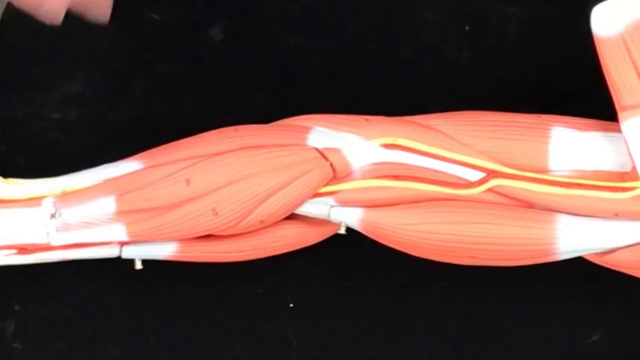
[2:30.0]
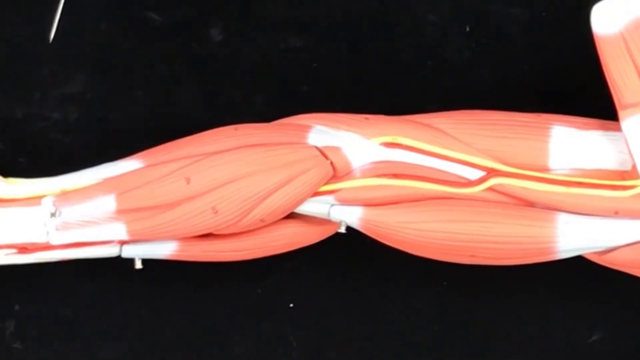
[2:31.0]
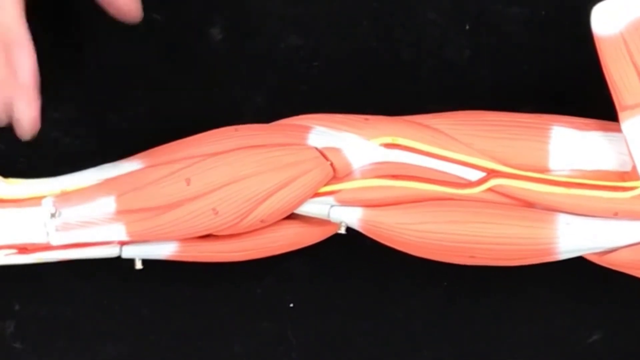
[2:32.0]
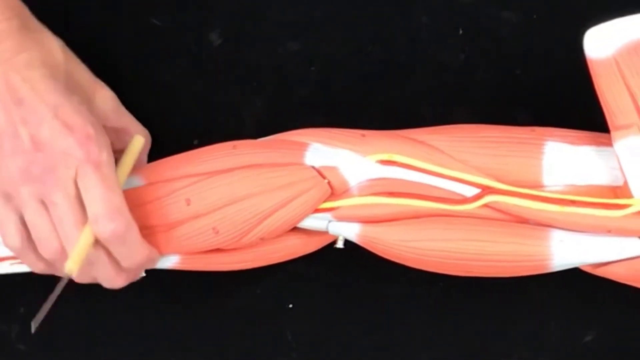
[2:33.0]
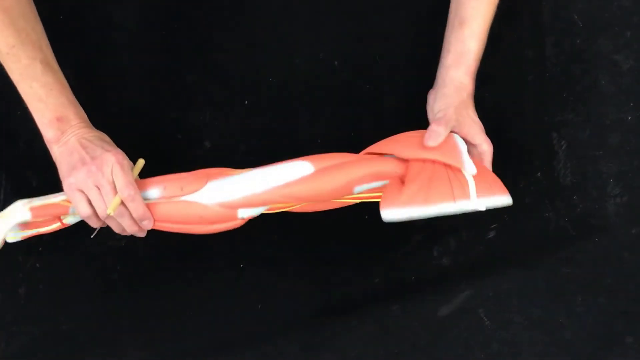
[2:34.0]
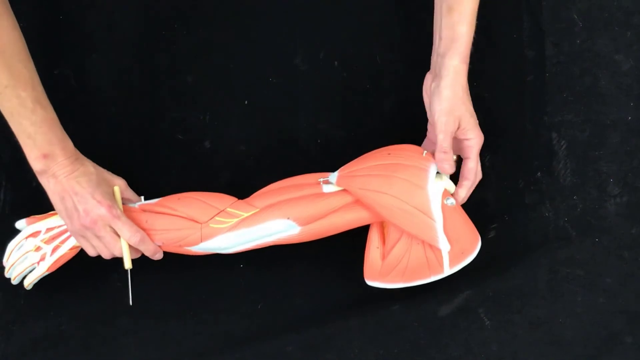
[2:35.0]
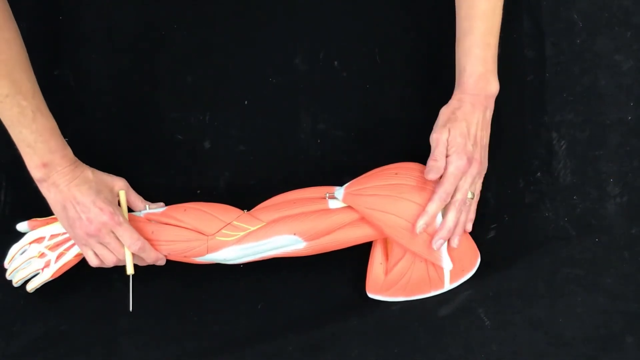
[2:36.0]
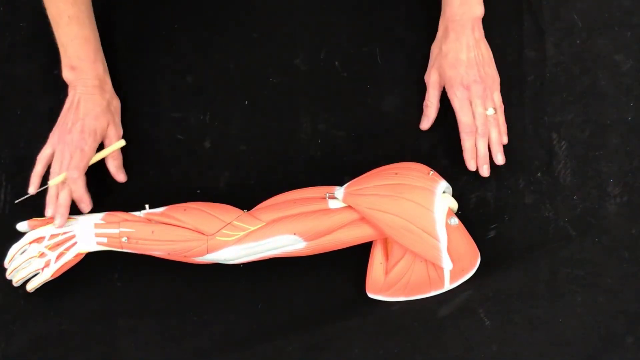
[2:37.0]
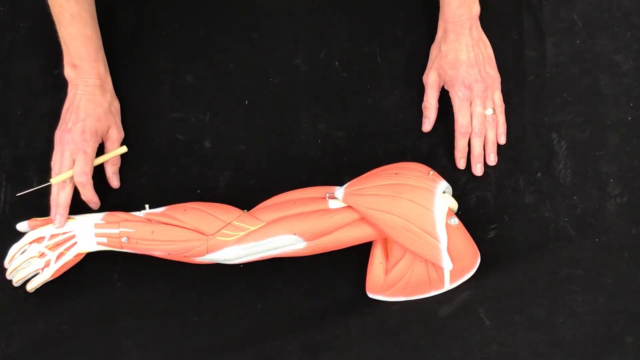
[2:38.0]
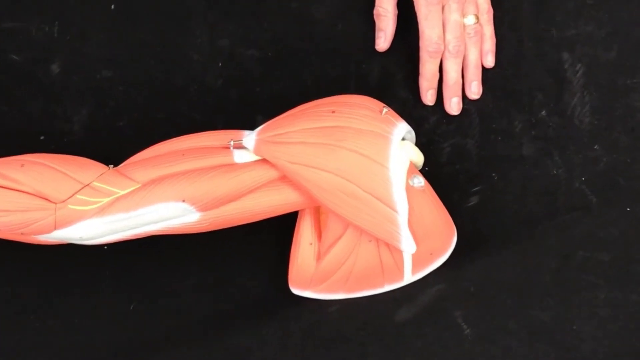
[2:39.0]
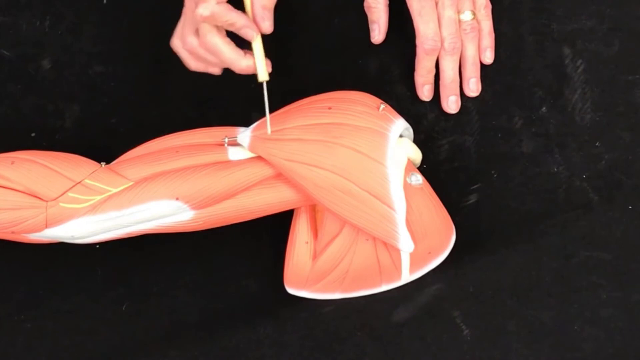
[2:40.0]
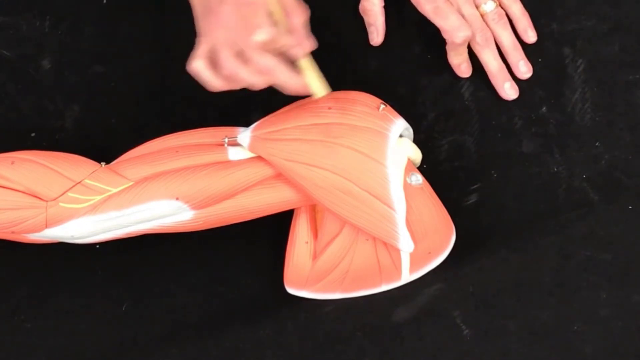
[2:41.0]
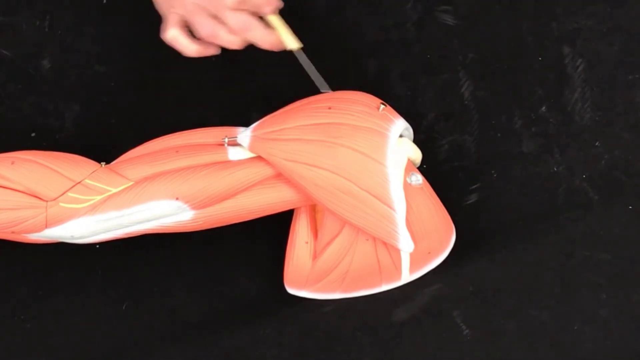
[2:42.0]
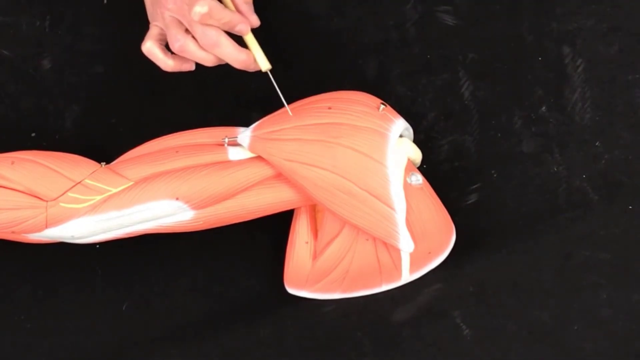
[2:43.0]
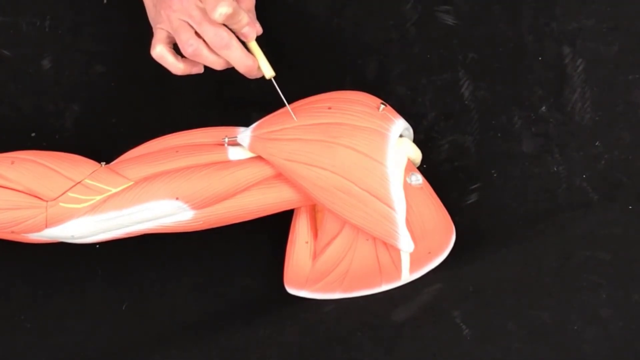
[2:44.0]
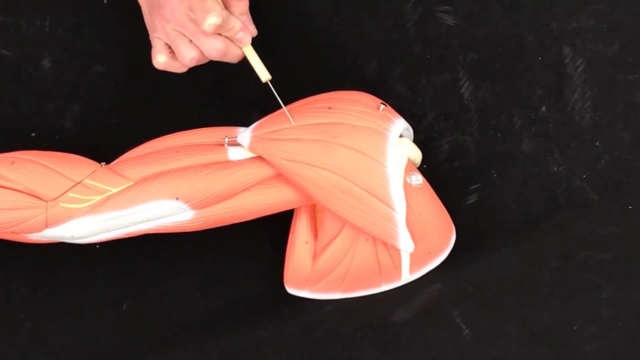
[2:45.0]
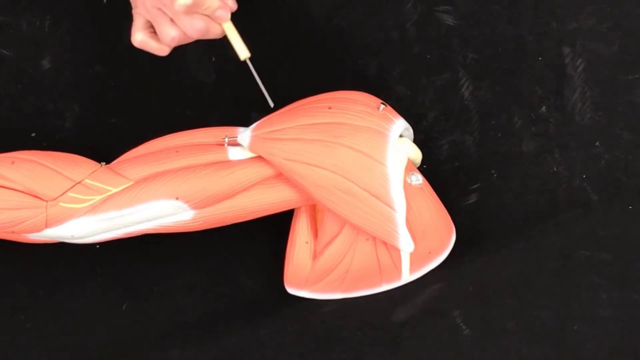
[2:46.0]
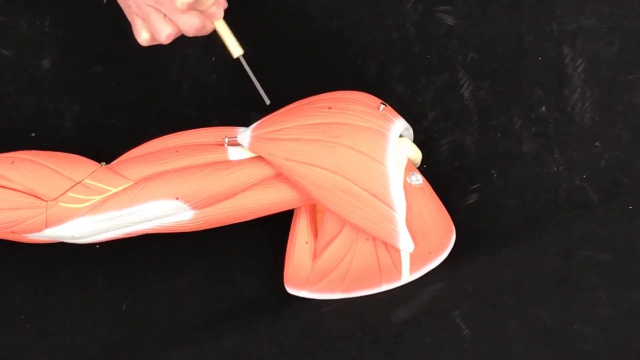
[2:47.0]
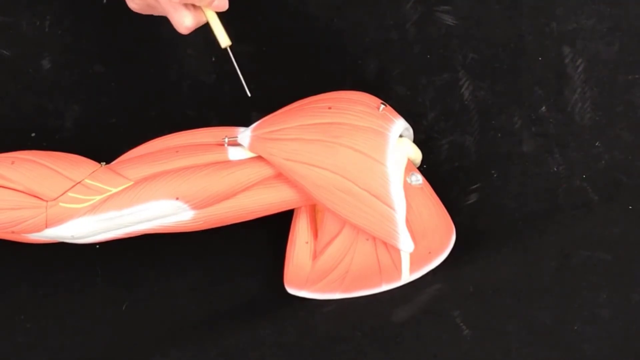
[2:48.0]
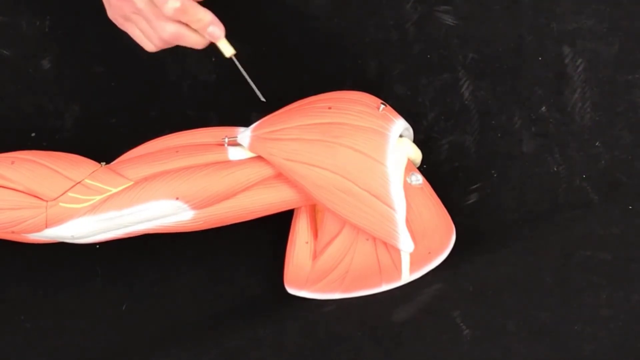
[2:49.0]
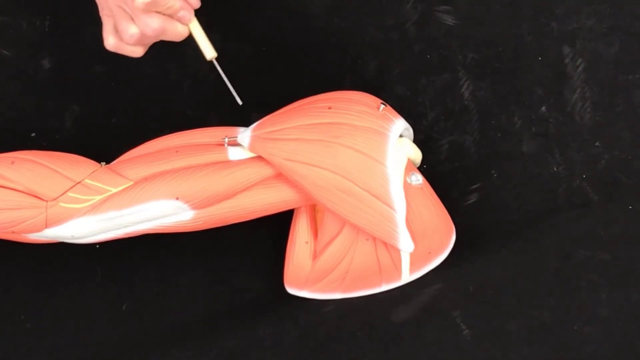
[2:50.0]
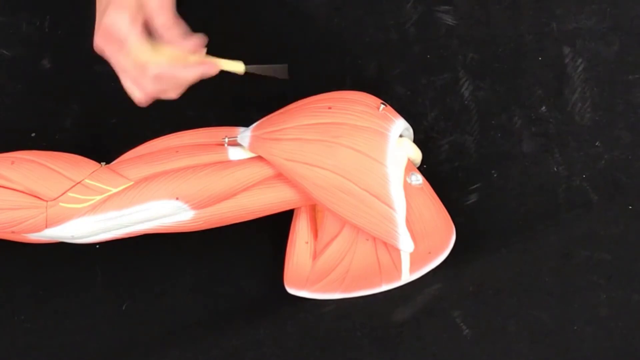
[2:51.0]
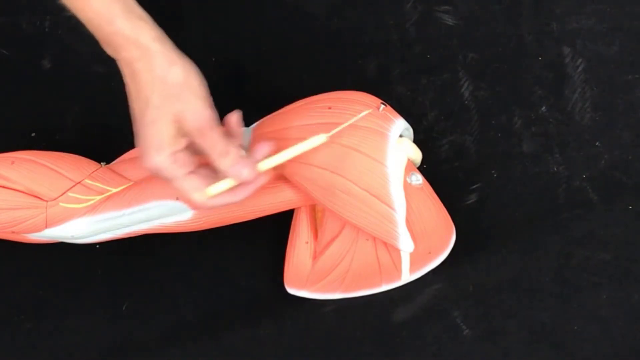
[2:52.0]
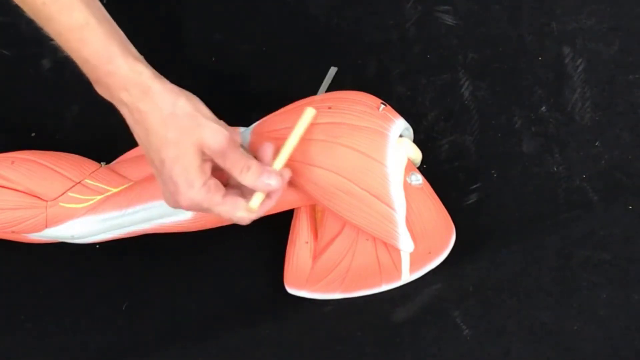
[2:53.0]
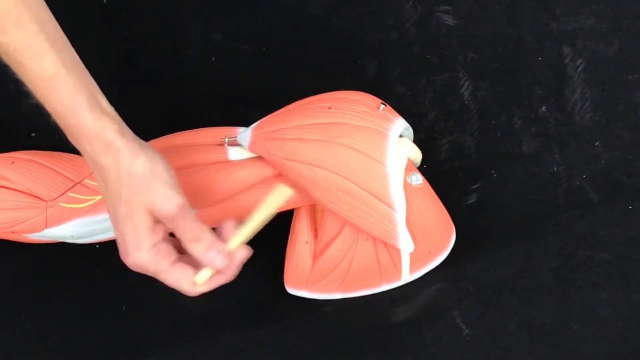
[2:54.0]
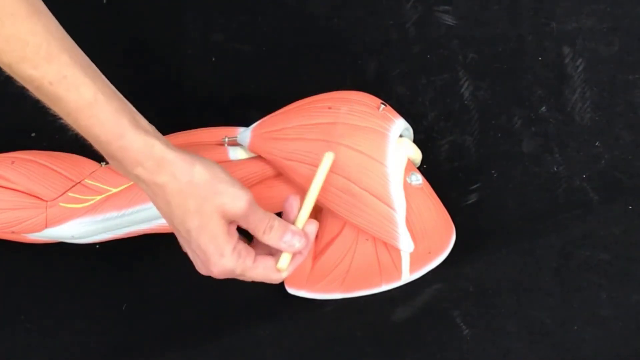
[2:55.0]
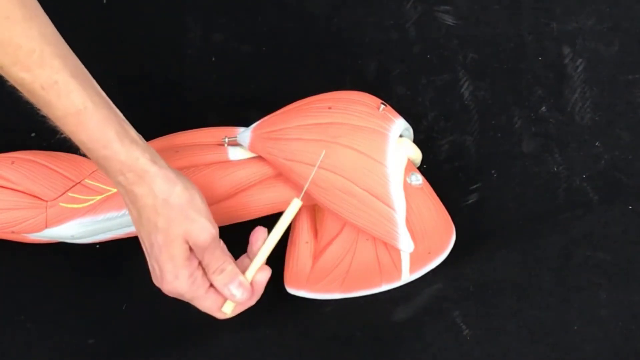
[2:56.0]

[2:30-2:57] The teacher lifts the model, turns it upside down and lays it back on the black desk, so that it appears to show the outside back of the shoulder and arm. She puts her left hand down on the desk up near the shoulder. The camera zooms in on the shoulder, the upper arm and half of the lower arm. She brings the pointer up to the shoulder cap and makes large circles over the rounded shoulder cap muscle, continuing to point at it in various places. Then she moves her hand forward of the model, tilts the pointer back toward it, makes more large circles over the shoulder cap and taps on it with the pointer. She appears to be emphasizing something underneath the muscle mass of the rounded shoulder cap.